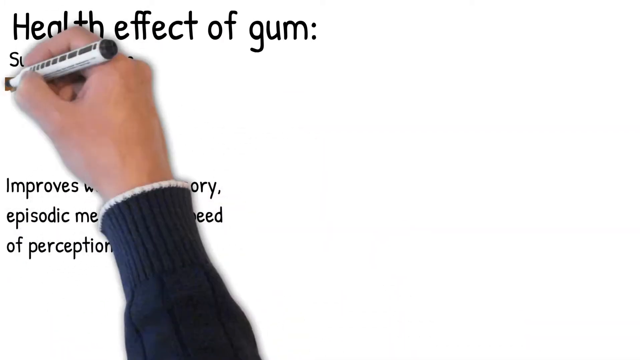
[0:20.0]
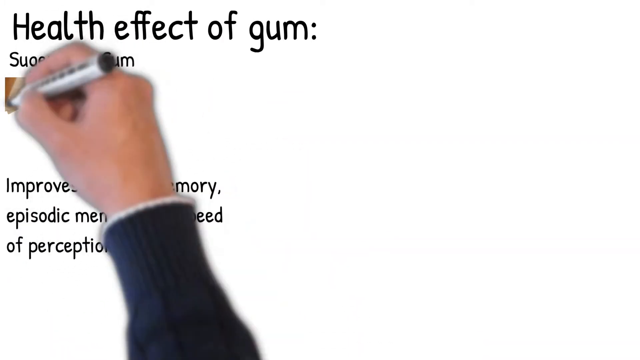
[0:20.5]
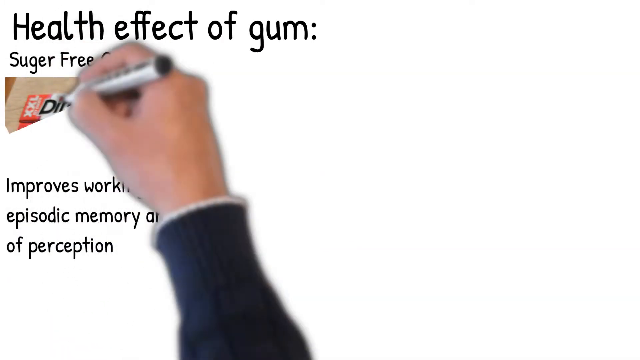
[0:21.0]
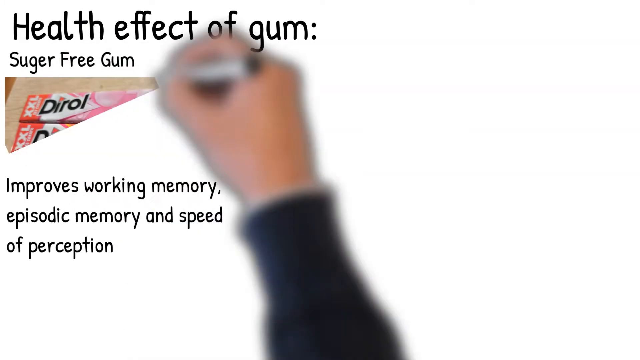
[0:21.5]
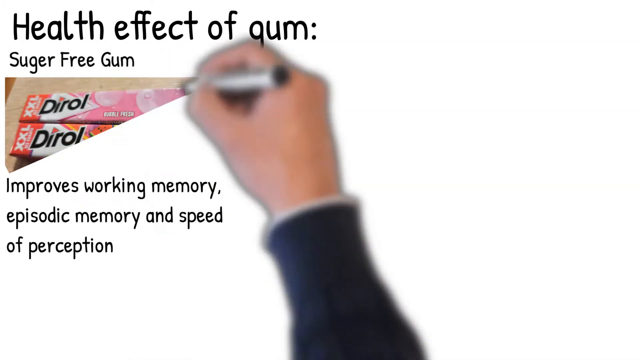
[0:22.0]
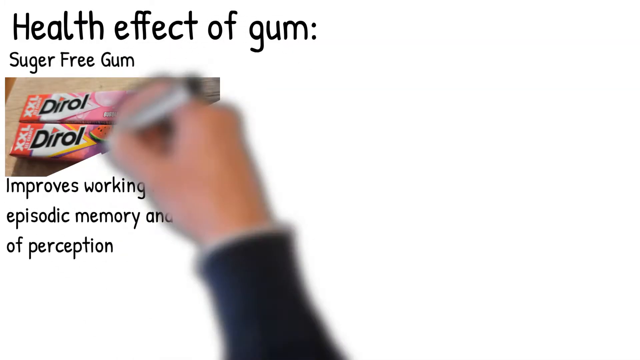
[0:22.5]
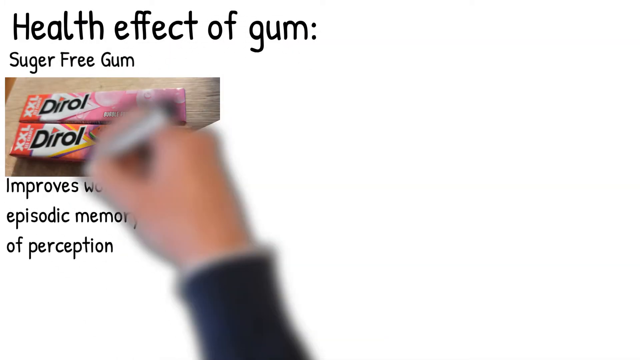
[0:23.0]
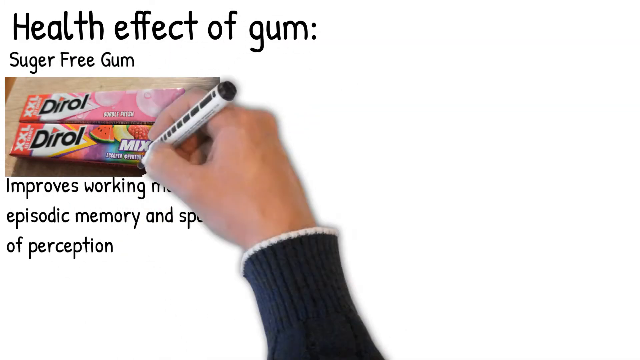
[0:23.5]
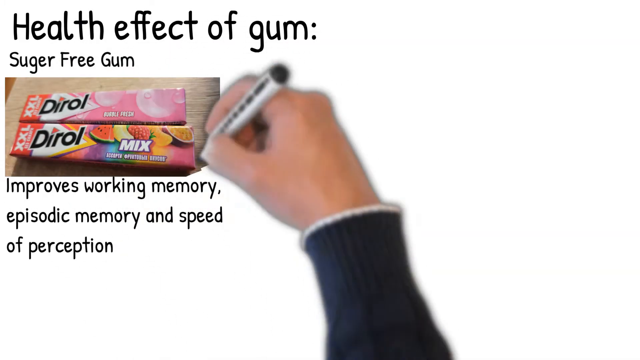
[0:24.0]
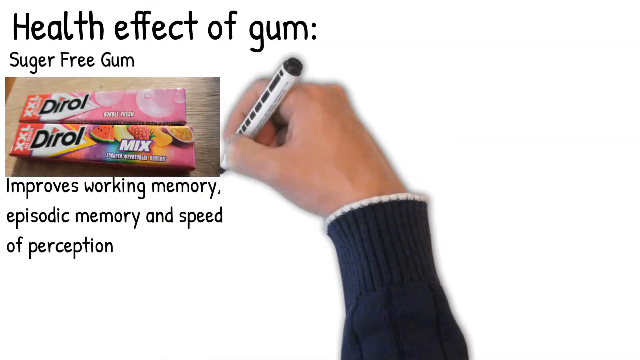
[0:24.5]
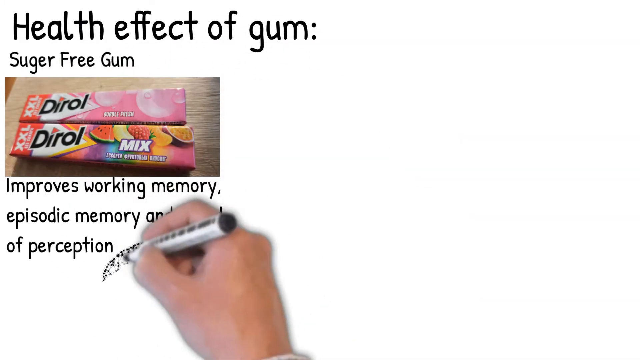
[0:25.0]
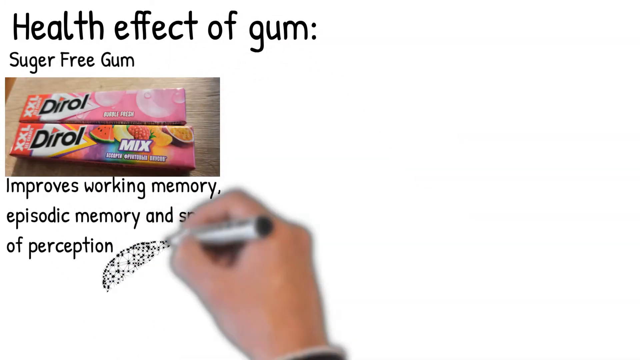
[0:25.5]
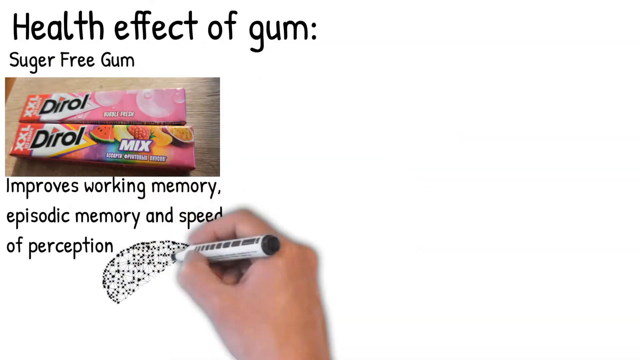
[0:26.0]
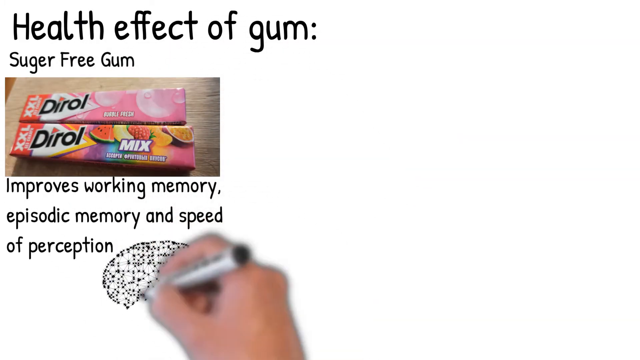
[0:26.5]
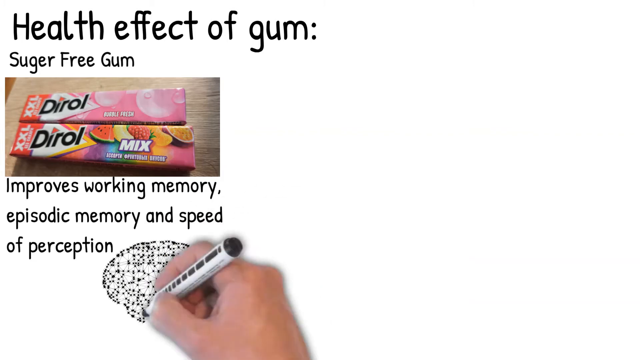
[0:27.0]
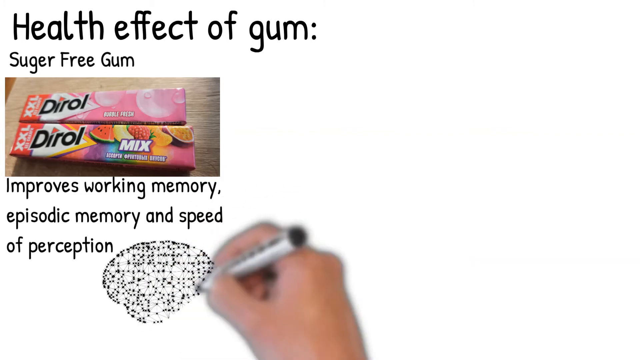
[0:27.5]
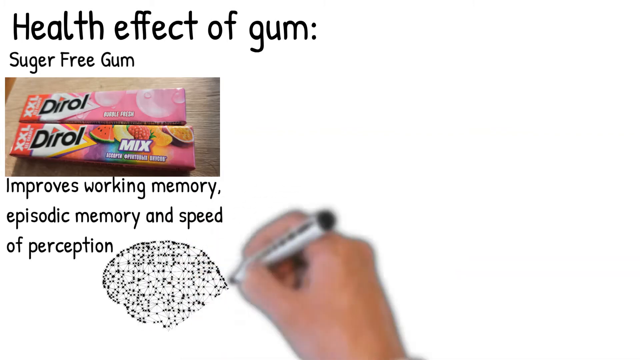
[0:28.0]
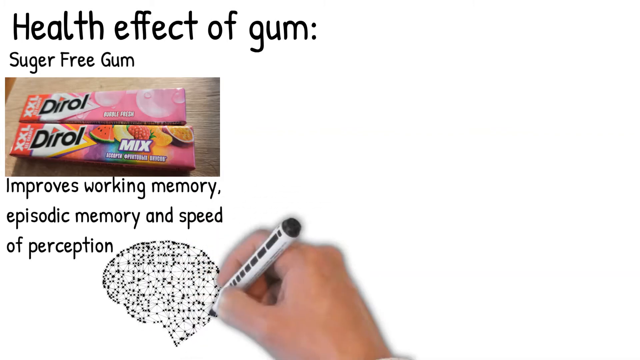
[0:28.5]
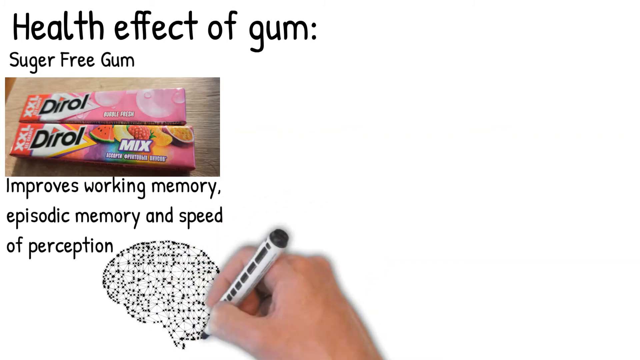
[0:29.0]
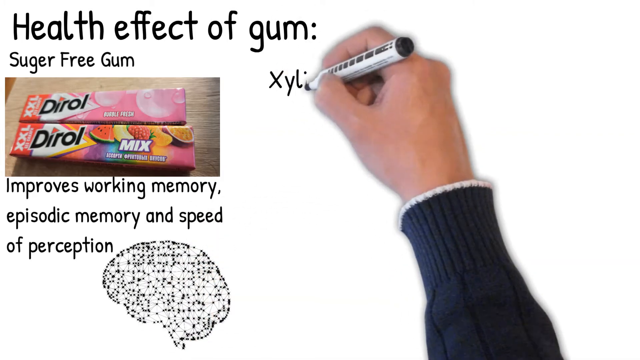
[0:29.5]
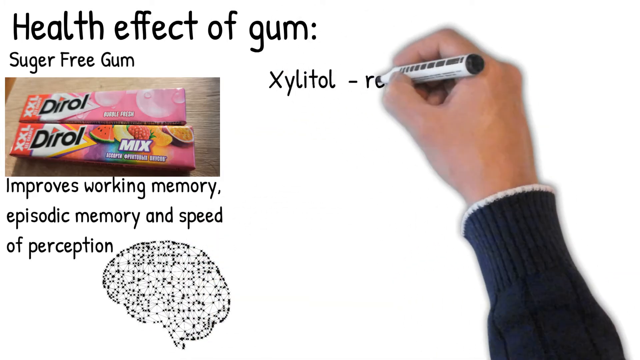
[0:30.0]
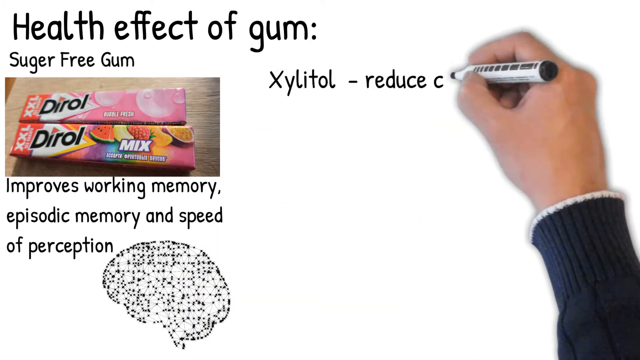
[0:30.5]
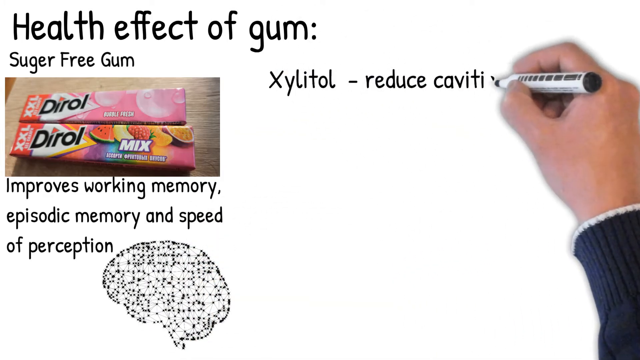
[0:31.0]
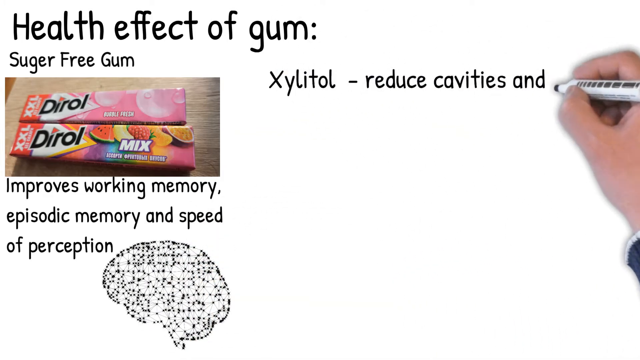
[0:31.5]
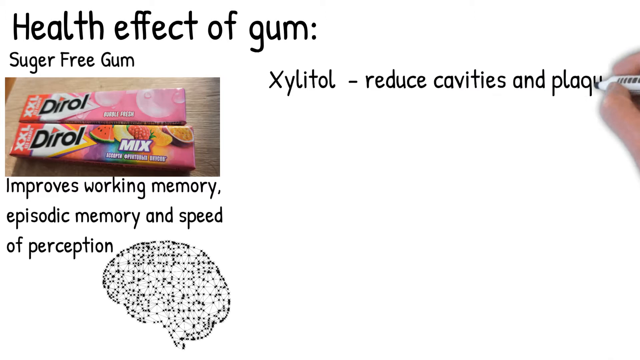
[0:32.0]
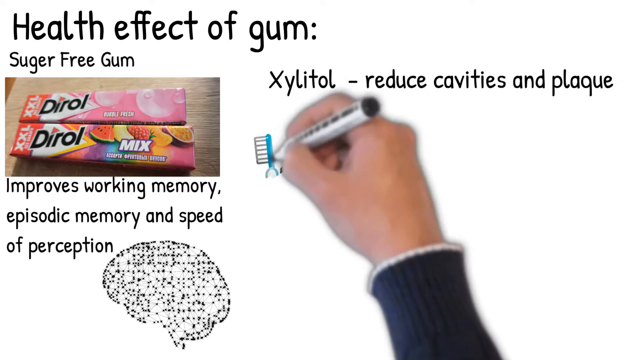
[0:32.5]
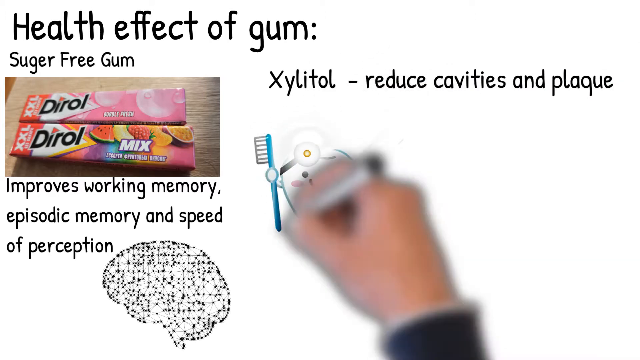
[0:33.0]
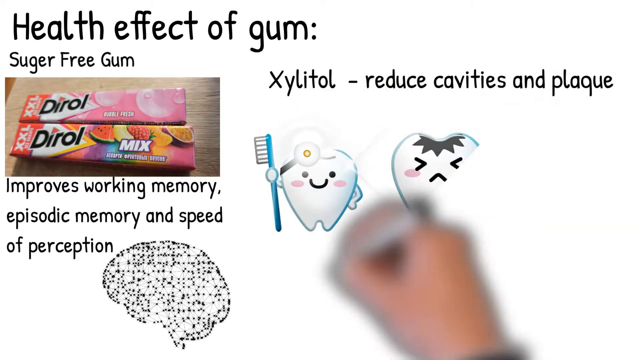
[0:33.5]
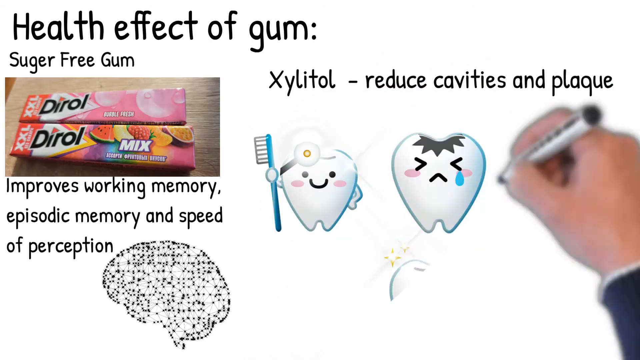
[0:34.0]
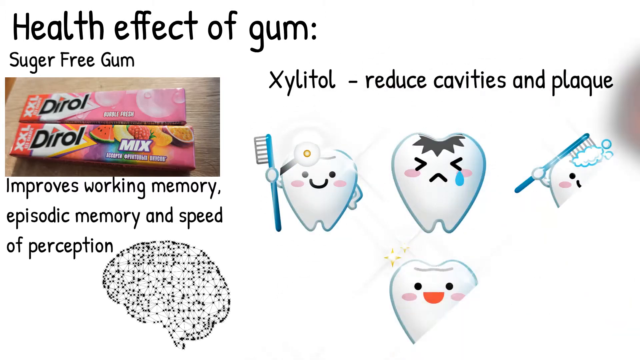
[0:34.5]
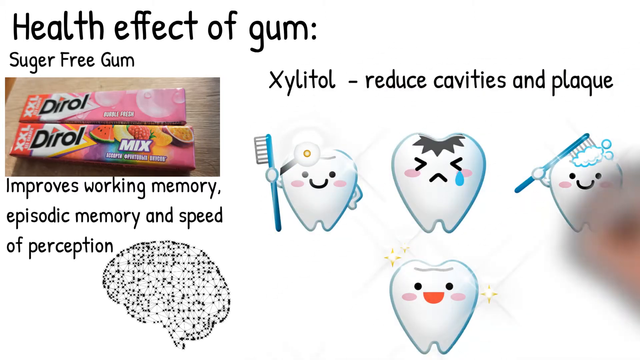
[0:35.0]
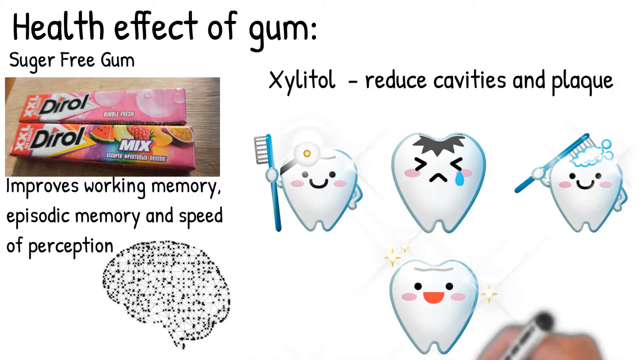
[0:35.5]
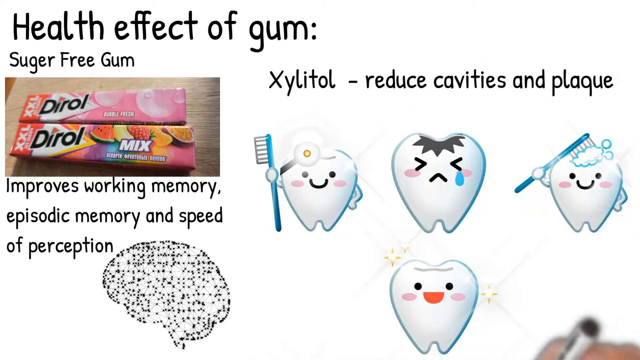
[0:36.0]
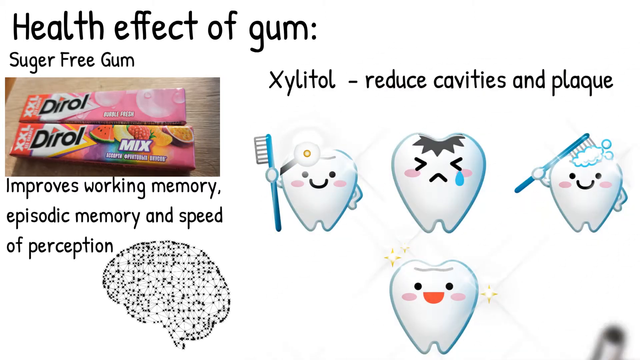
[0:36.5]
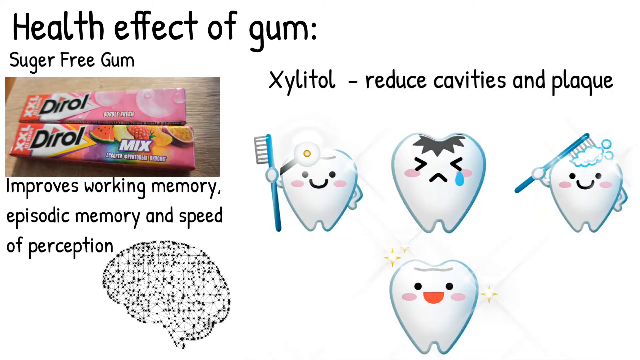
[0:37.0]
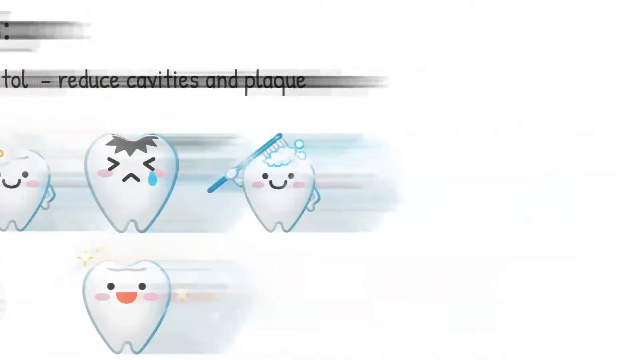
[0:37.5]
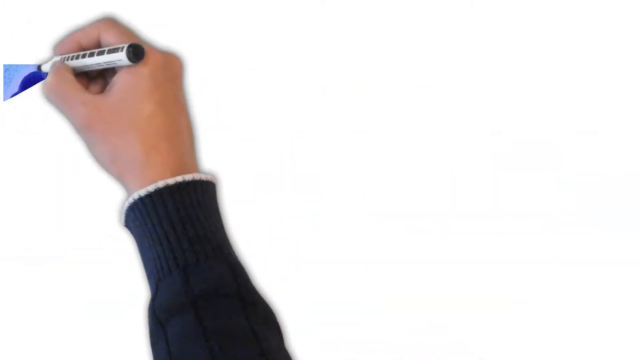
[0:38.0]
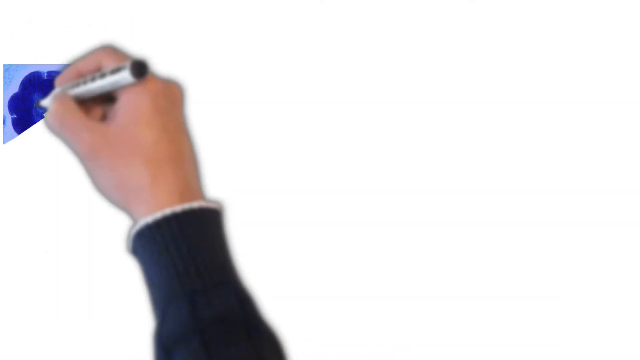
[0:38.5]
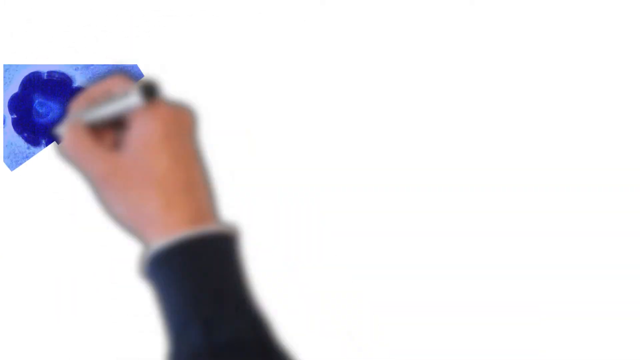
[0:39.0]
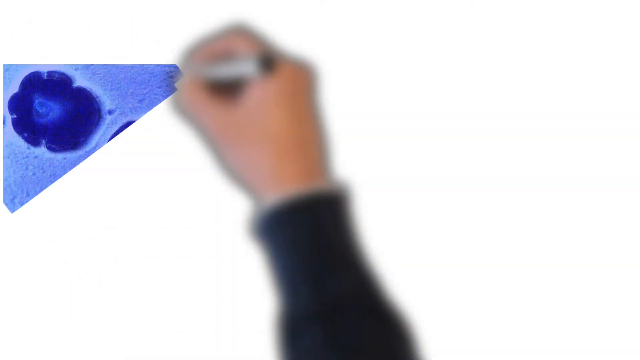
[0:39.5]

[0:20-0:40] The hand moves below the top headline text and makes a diagonal scribbling motion from the top left-hand corner to the bottom right-hand corner, forming a rectangle shape, and the same image of chewing gum that was used twice on the earlier slide appears. The hand then moves below the text about memory, scribbles in the same pattern, and an image of a brain appears. To the right of this, the hand writes again: "xylitol - reduces cavities and plaque". The hand moves below this and scribbles from left to right across the rest of the blank space underneath the text, revealing a clipart image of four teeth. Three teeth are at the top: the tooth on the left wears a dental headband with a light on top of its head and holds a blue toothbrush with its bristles facing left; the middle tooth has a cavity and is crying; the tooth on the far right is brushing its head with the blue toothbrush. The tooth below these is happy and has no cavities. The whole image then slides to the left, leaving a blank screen, and the hand returns to the top left-hand corner and begins scribbling in a diagonal motion, moving down.